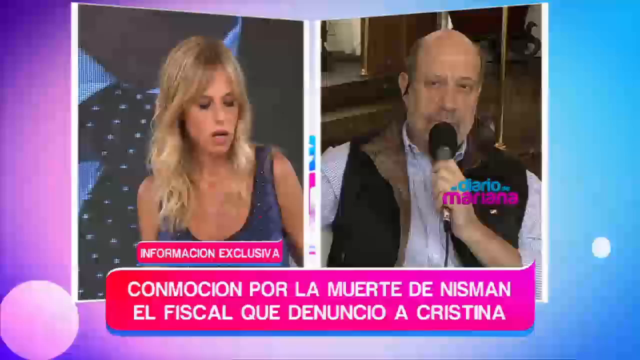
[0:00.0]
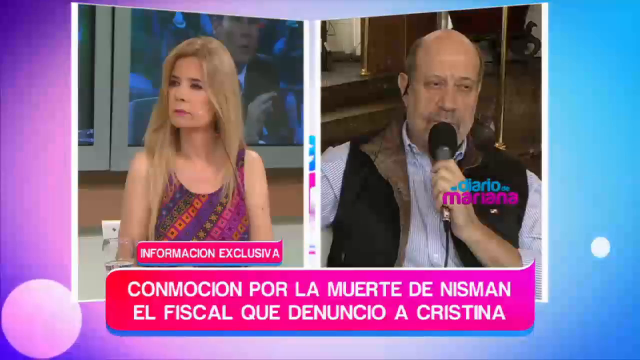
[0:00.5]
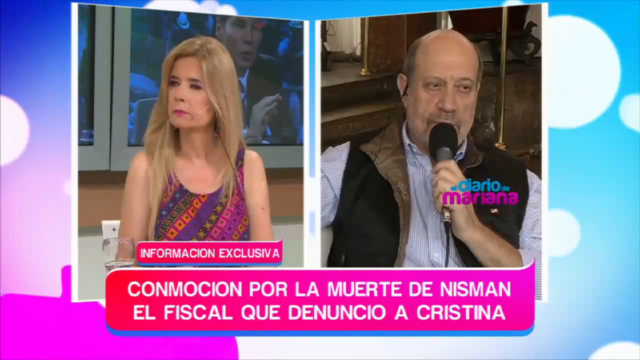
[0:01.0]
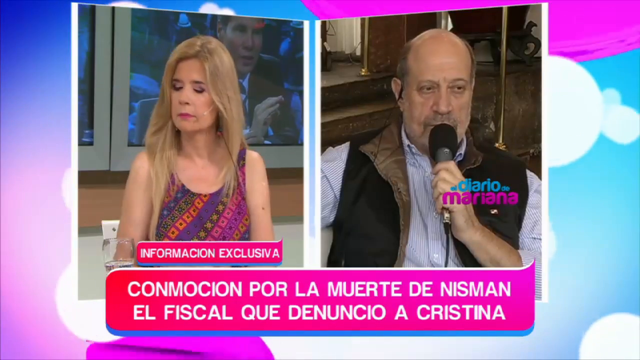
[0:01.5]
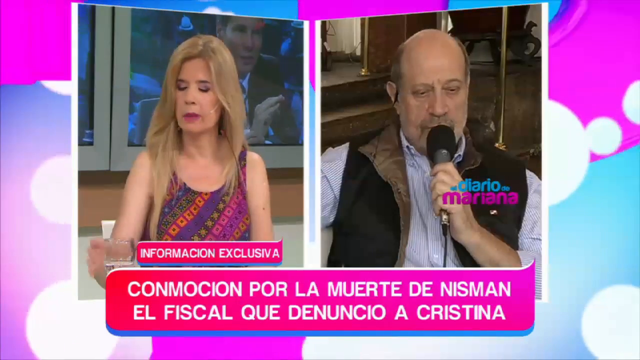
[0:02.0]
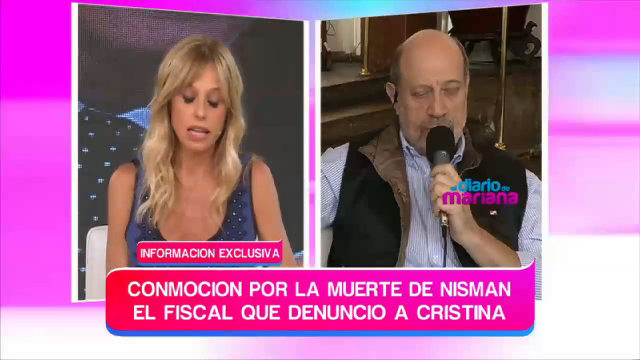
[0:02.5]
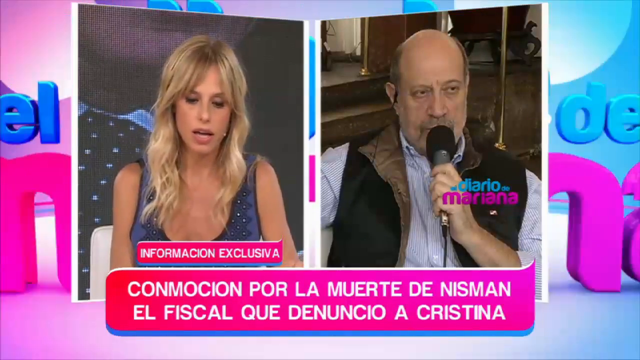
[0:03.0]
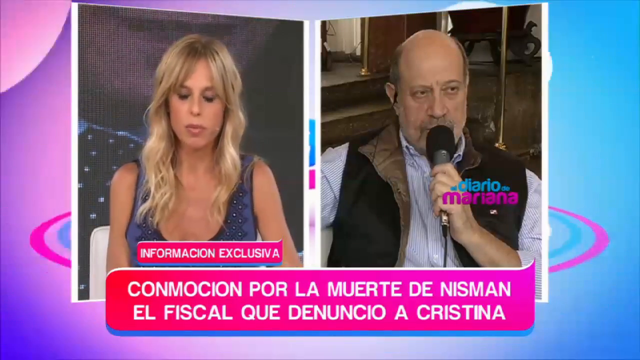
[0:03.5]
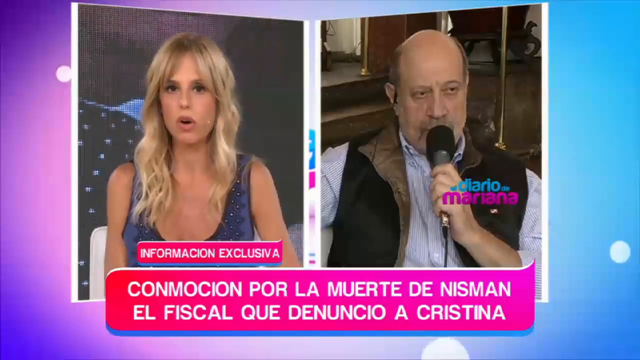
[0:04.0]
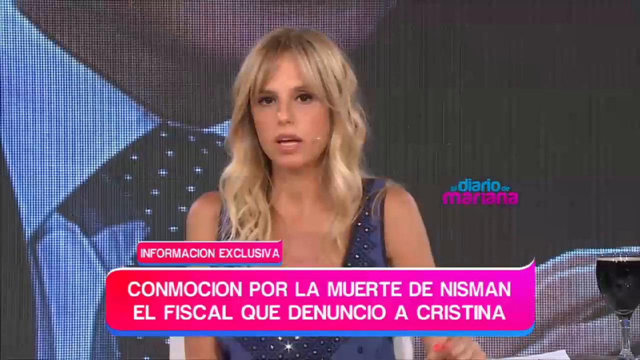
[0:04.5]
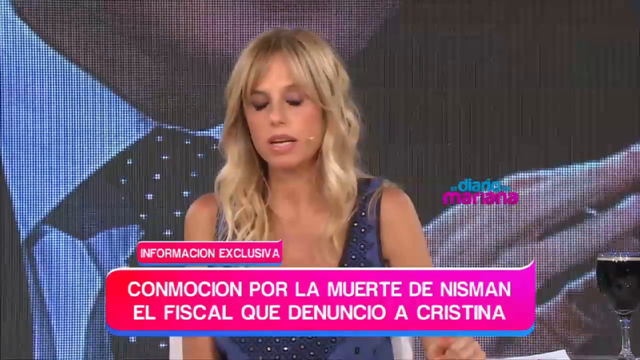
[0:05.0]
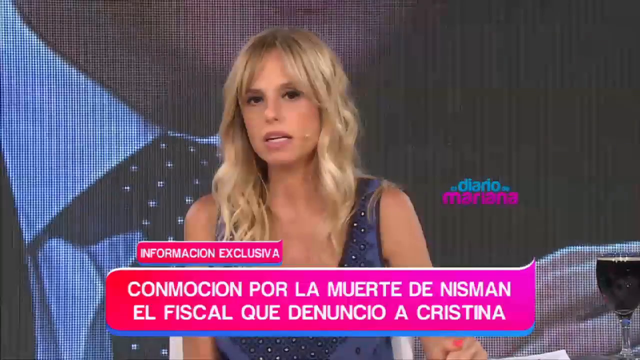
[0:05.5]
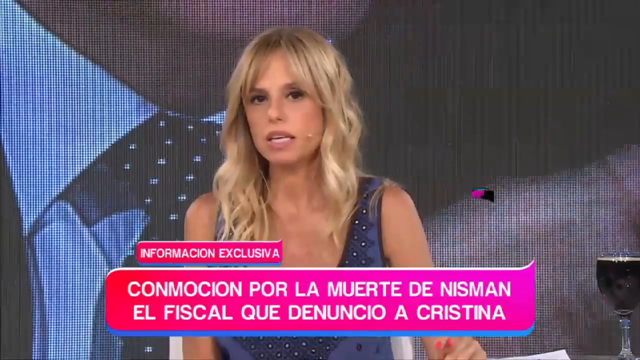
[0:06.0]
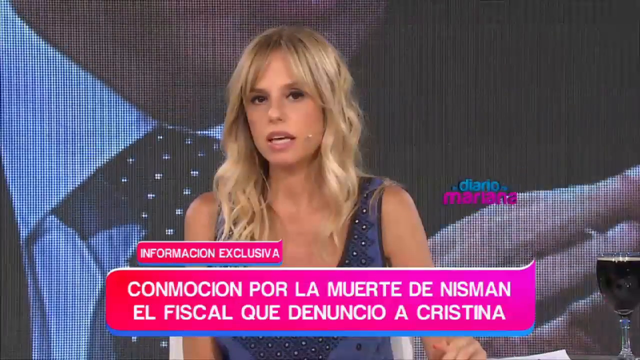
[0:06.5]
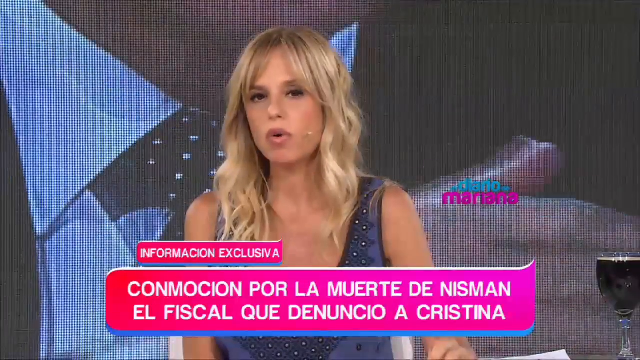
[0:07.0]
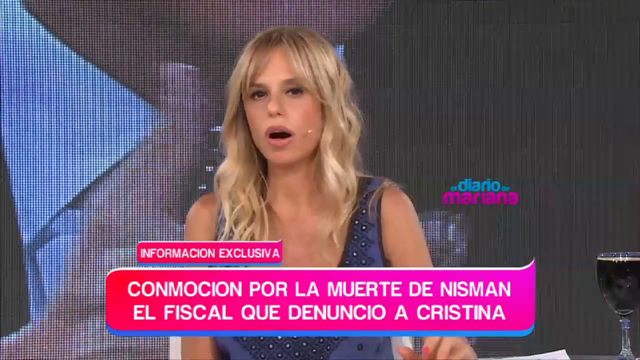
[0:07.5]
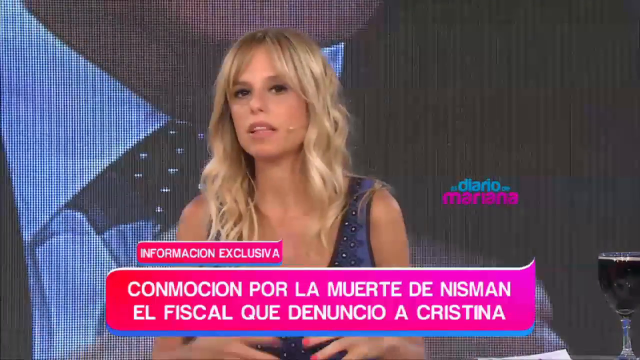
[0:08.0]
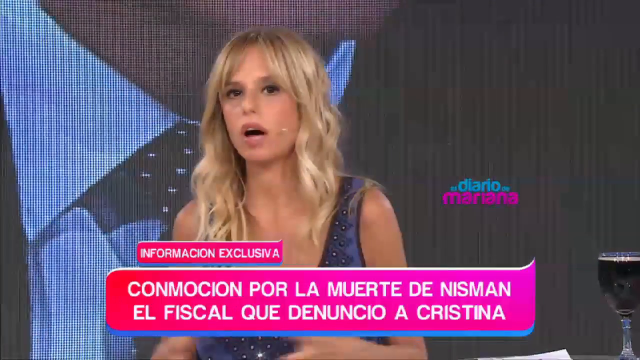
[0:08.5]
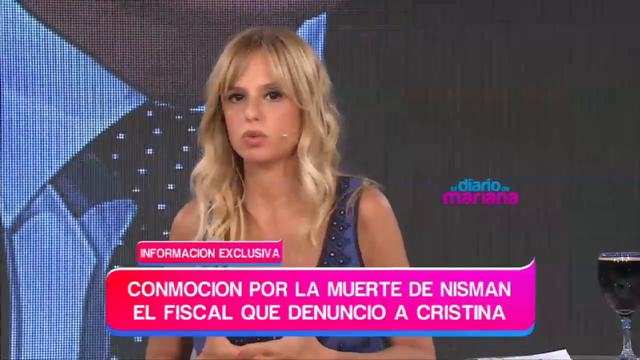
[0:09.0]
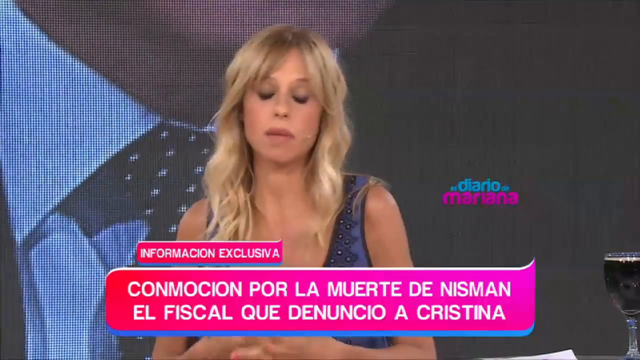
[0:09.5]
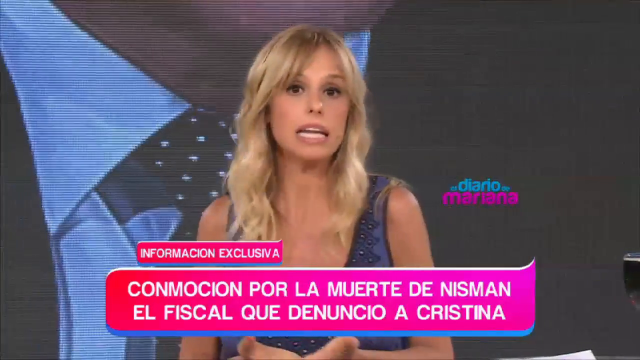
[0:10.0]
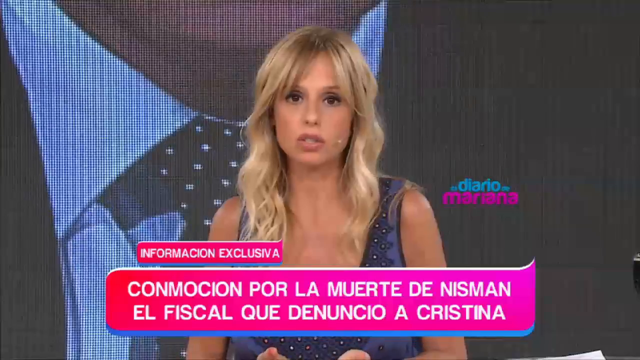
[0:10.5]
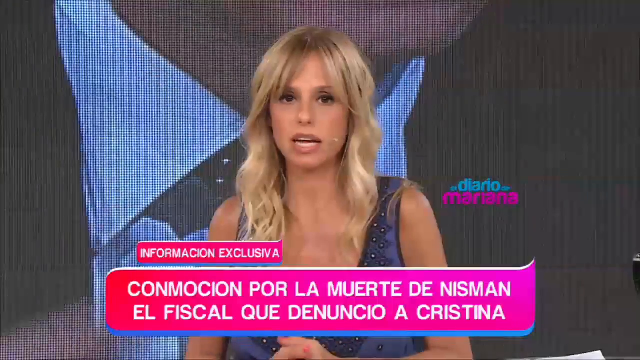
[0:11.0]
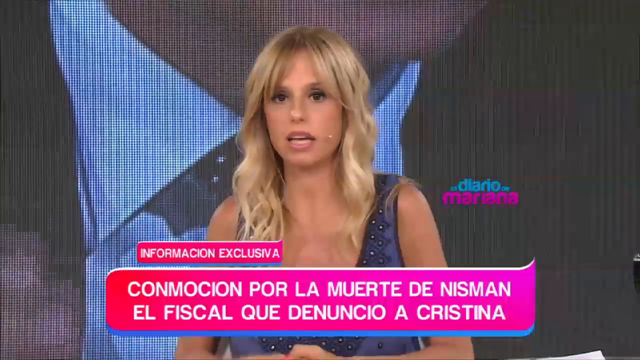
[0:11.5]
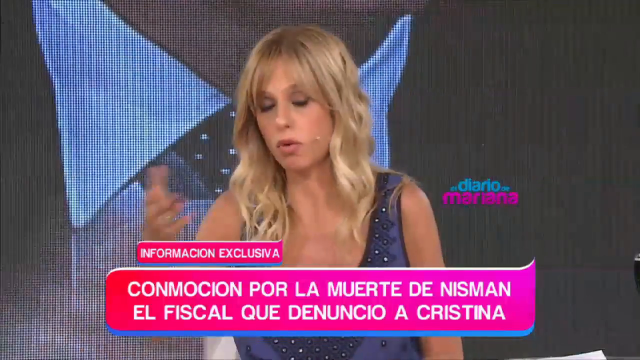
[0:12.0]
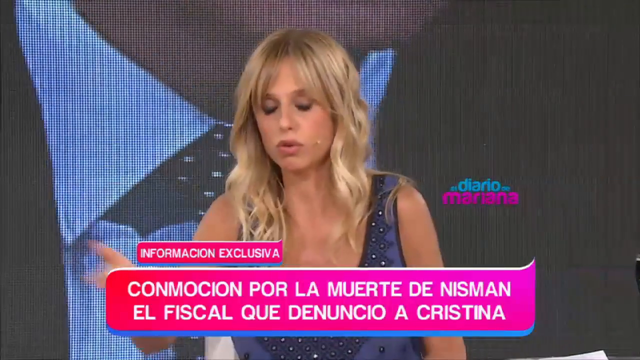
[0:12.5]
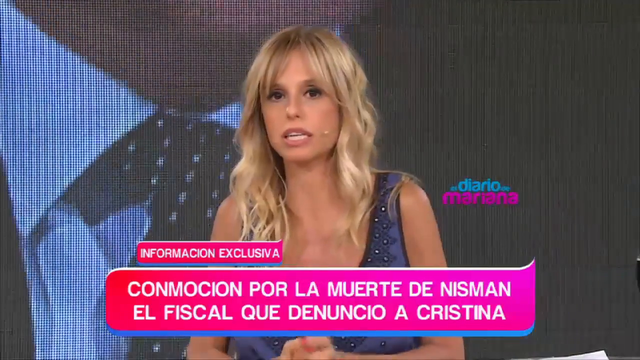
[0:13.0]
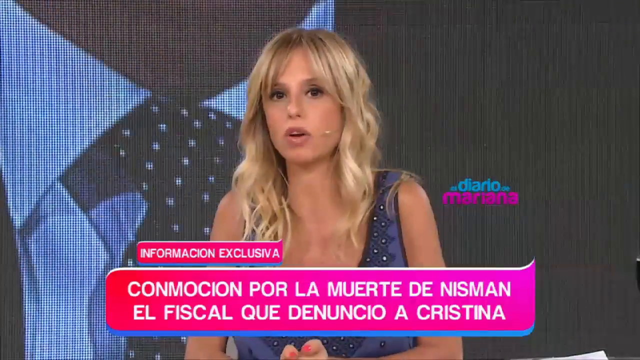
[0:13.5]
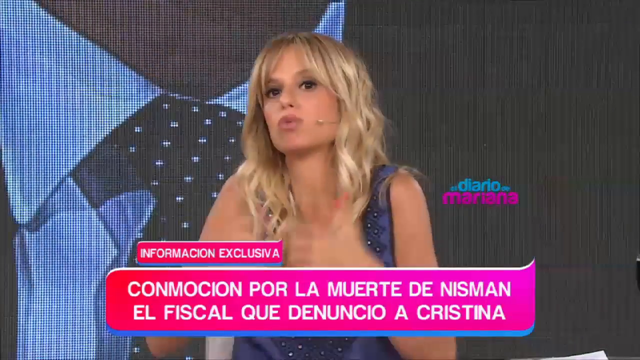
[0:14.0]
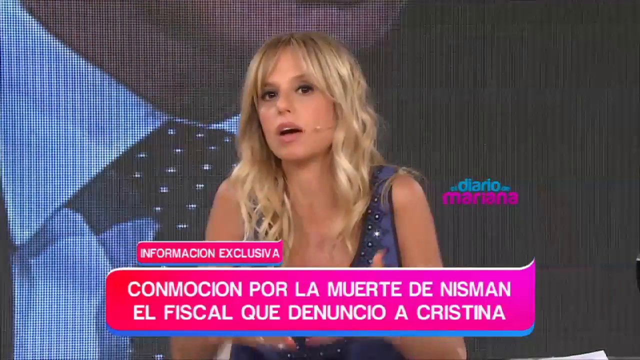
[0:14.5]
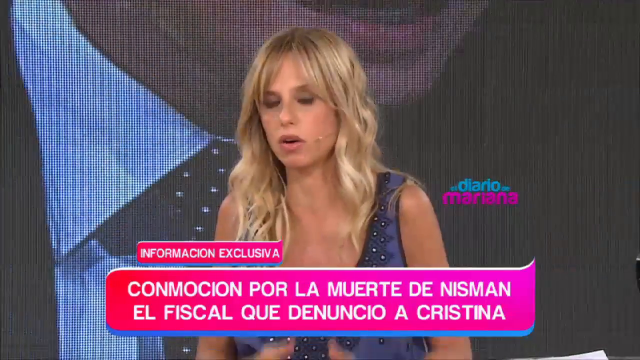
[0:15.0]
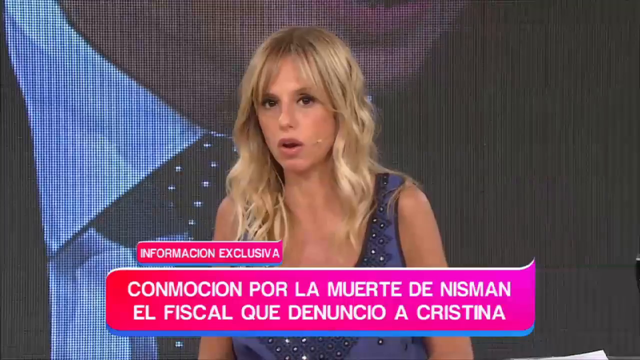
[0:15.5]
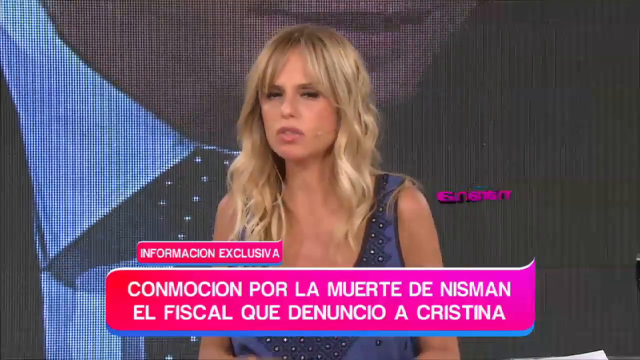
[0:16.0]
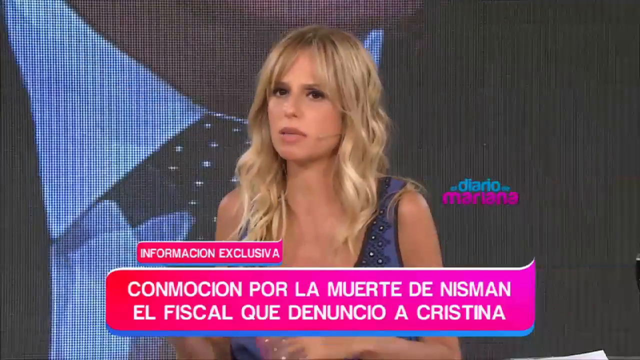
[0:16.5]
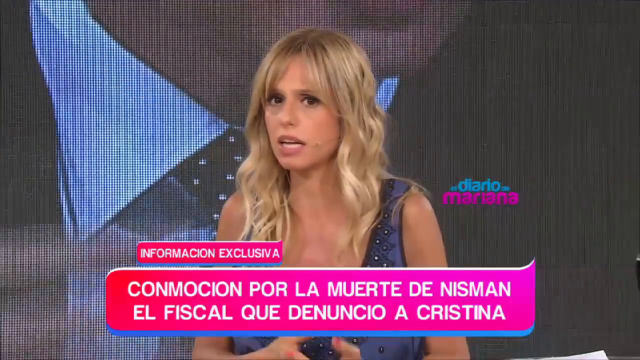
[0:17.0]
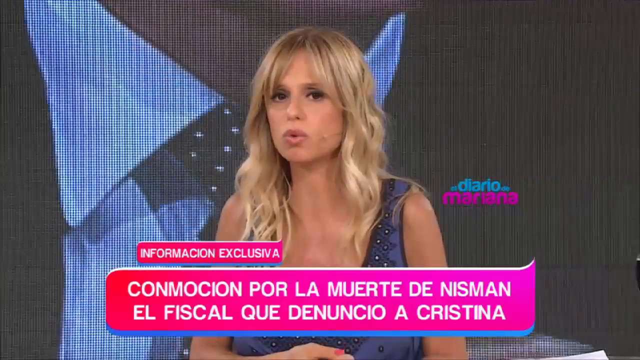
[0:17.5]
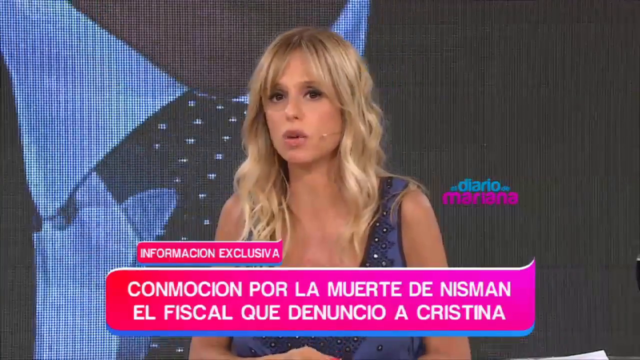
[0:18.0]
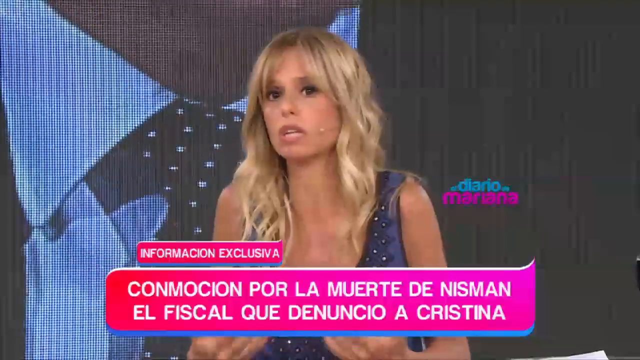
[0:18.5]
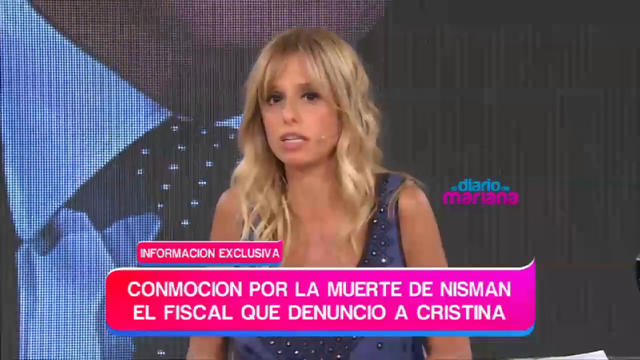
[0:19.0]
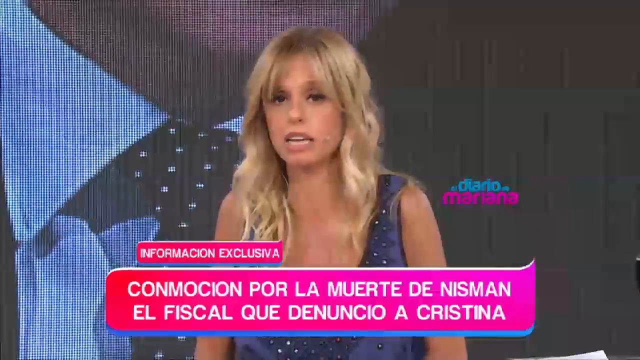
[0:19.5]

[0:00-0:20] A split screen shows a woman on the left and a man on the right. The program appears to be a show called El Diario de Mariana; its logo is on the right side, over the man. The man on the right holds a microphone in his left hand and talks into it. The woman on the left appears to be on the stage of a set and wears a light blue dress. The full screen then focuses on the woman, who has blonde hair and is talking. Behind her, a large screen shows a very close, very large view of a man's neck area; he wears a tie and a white collared shirt. Captions in Spanish appear at the bottom, in white text on a pink background. The woman continues to talk on the stage, moving her hands and looking toward the camera as she speaks. A very small microphone is on the left side of her face.